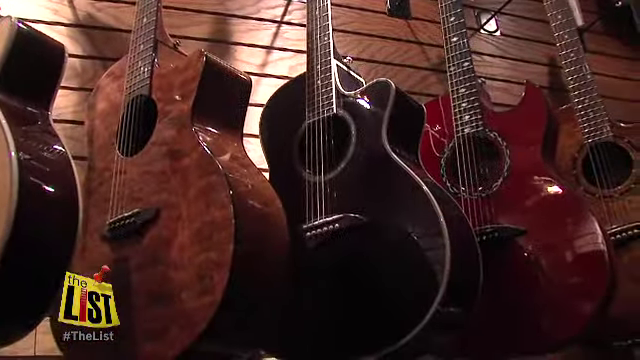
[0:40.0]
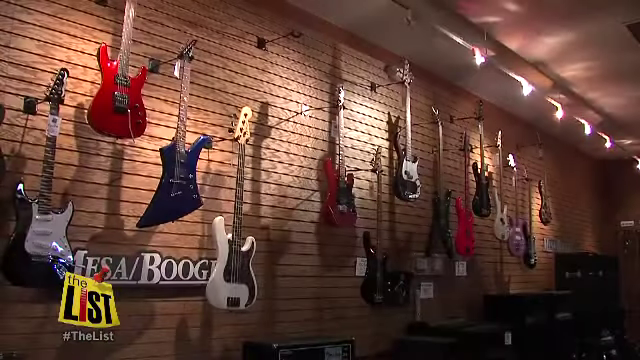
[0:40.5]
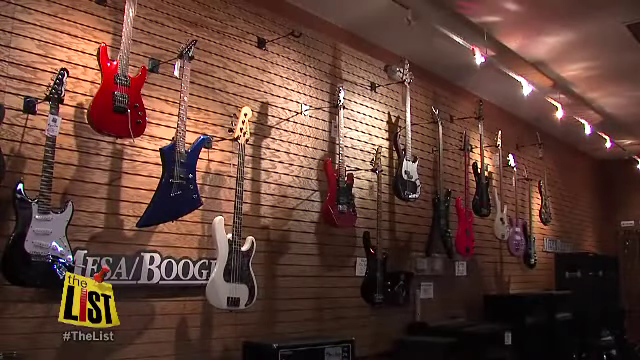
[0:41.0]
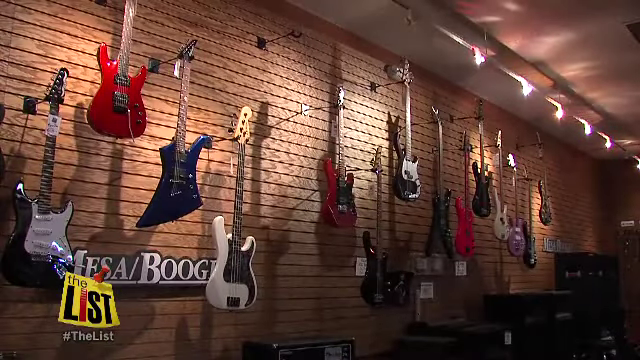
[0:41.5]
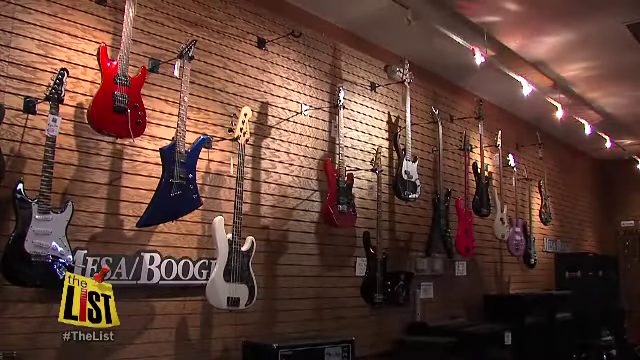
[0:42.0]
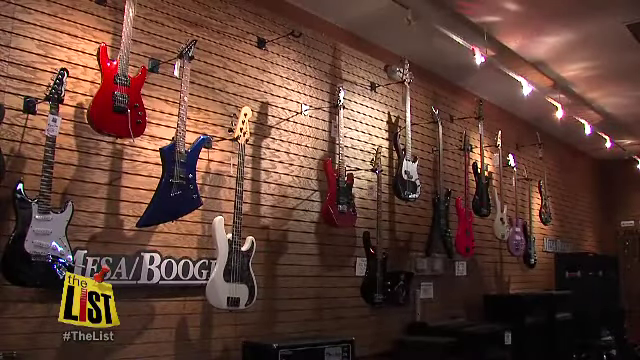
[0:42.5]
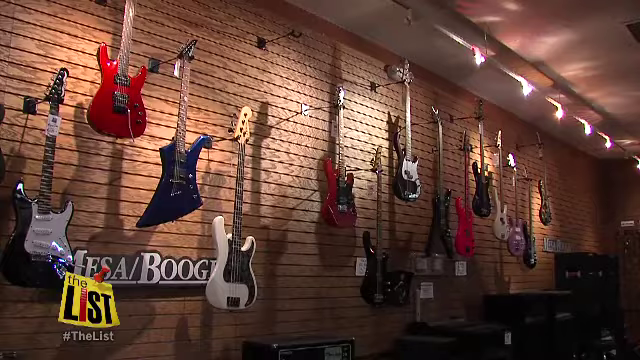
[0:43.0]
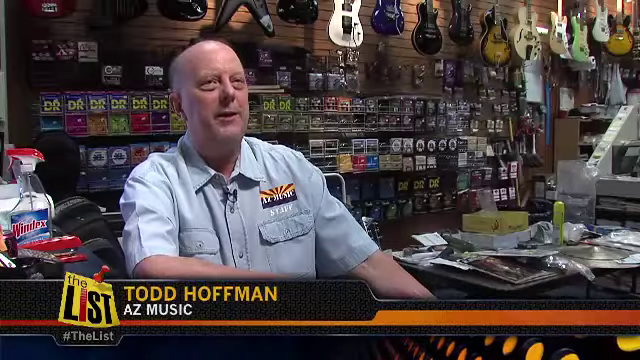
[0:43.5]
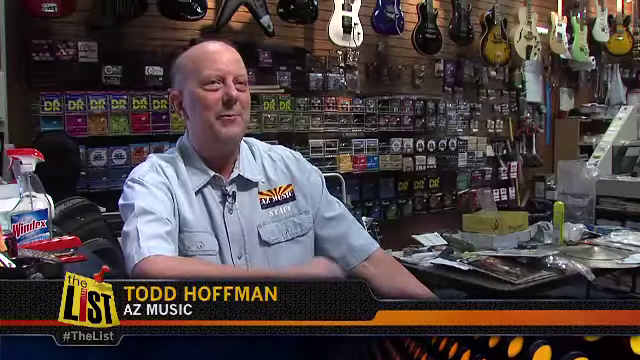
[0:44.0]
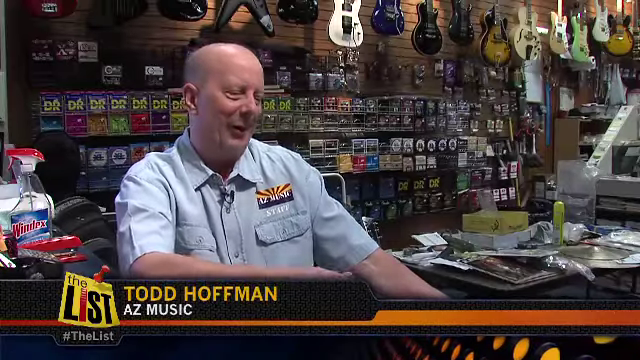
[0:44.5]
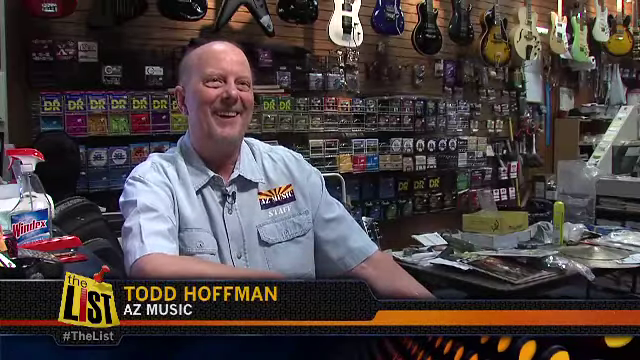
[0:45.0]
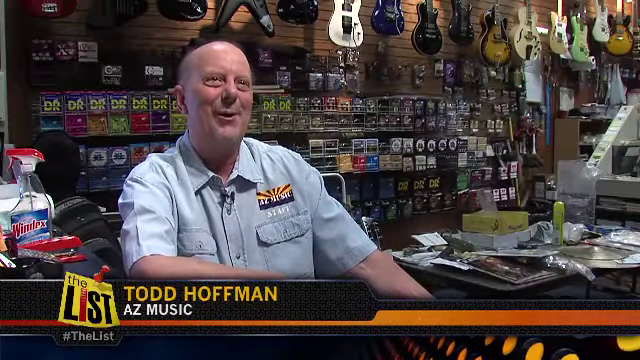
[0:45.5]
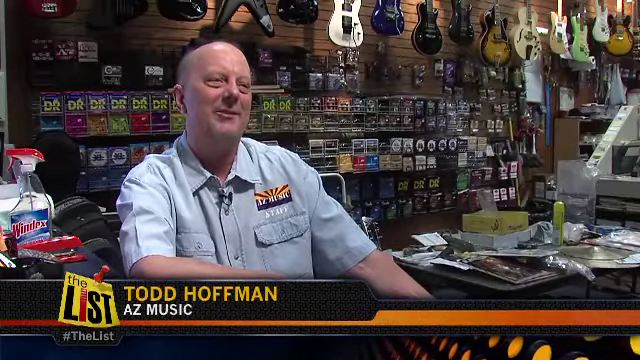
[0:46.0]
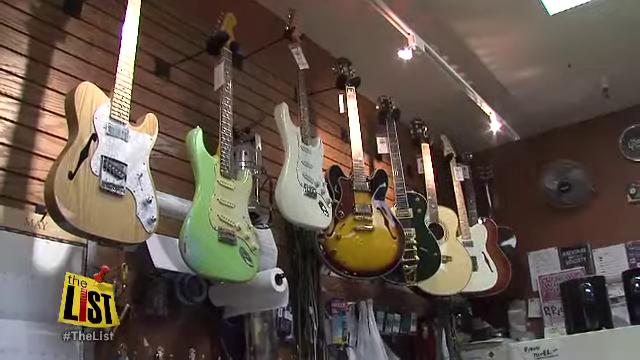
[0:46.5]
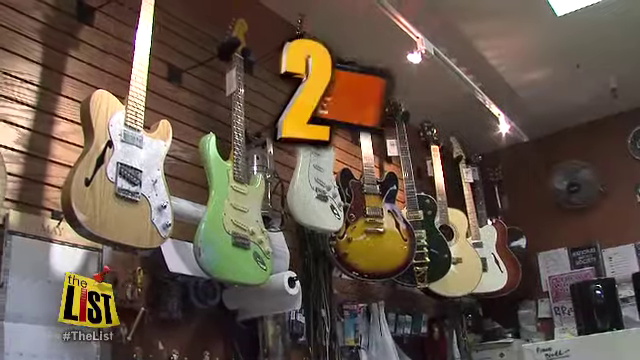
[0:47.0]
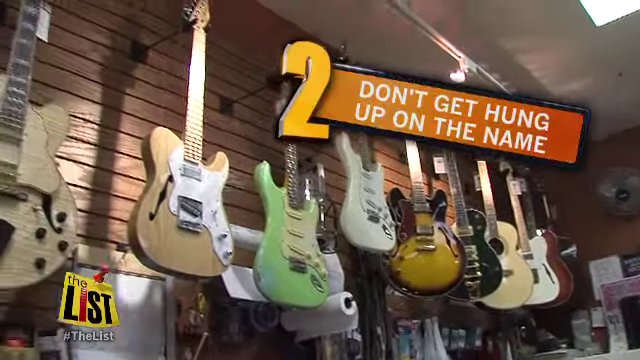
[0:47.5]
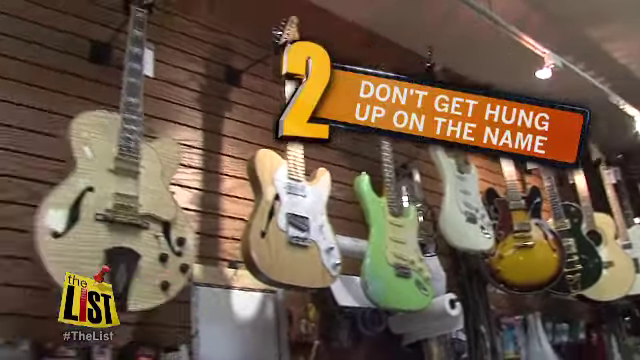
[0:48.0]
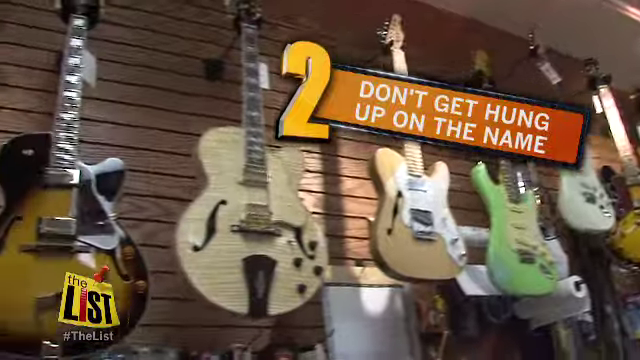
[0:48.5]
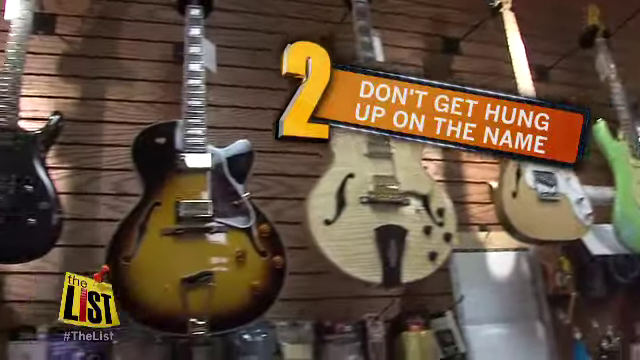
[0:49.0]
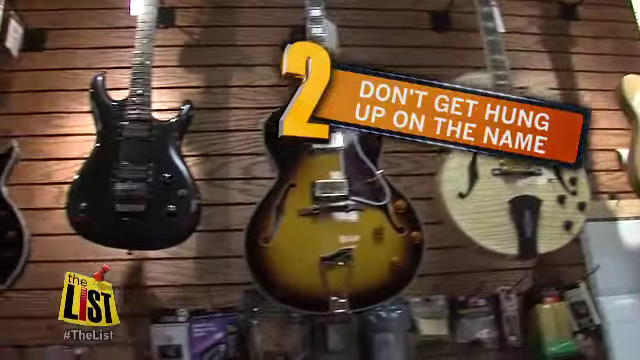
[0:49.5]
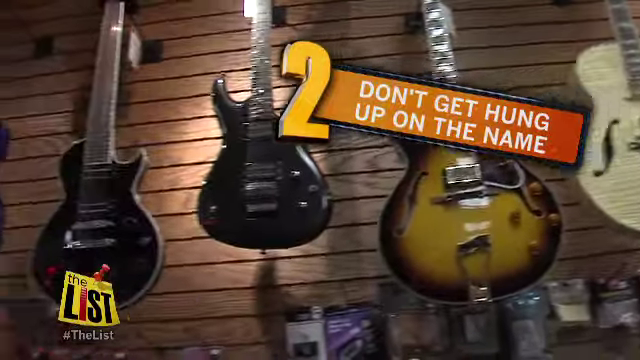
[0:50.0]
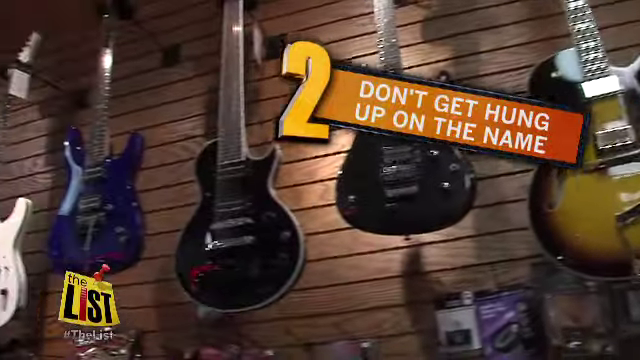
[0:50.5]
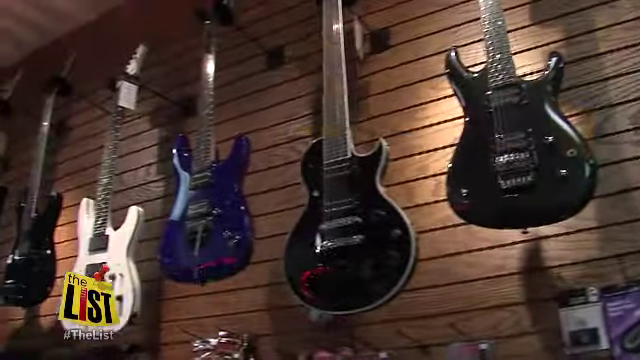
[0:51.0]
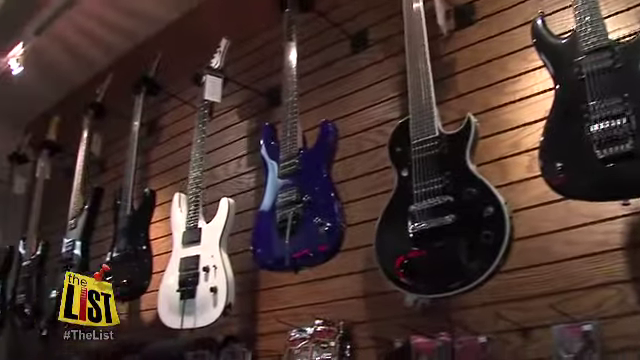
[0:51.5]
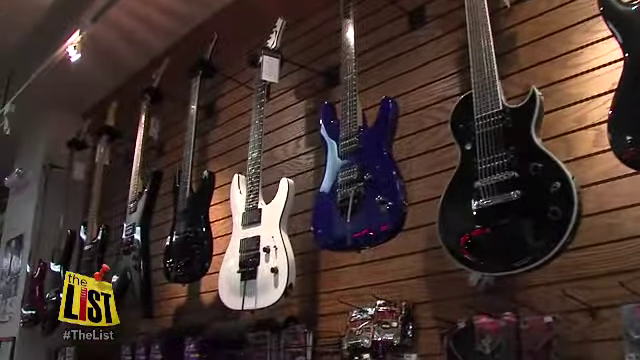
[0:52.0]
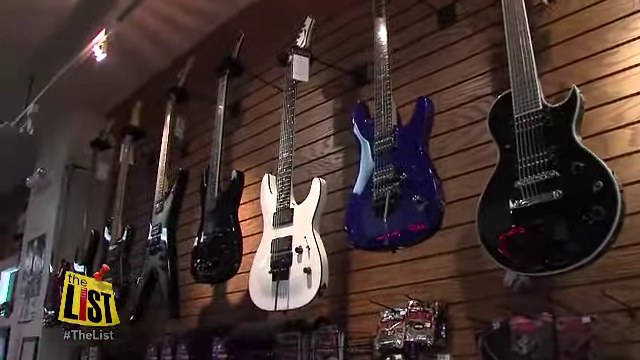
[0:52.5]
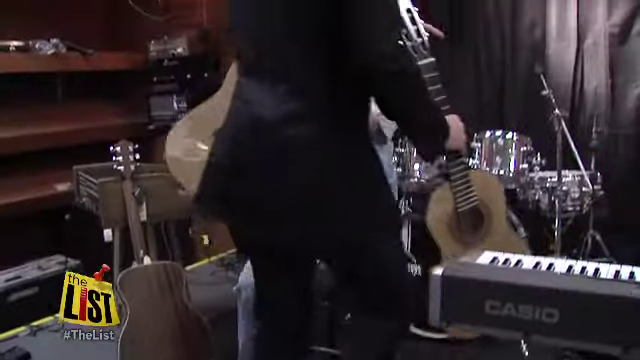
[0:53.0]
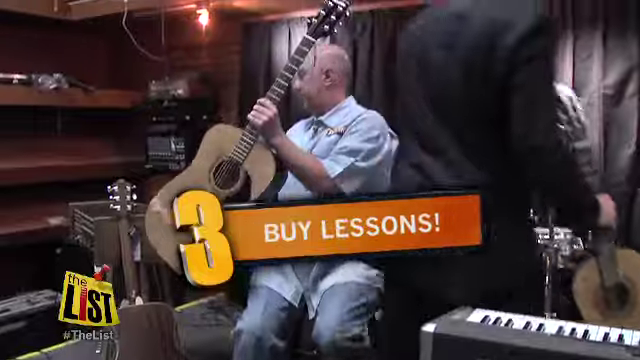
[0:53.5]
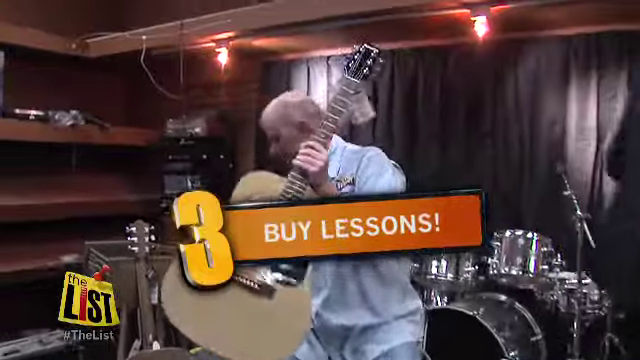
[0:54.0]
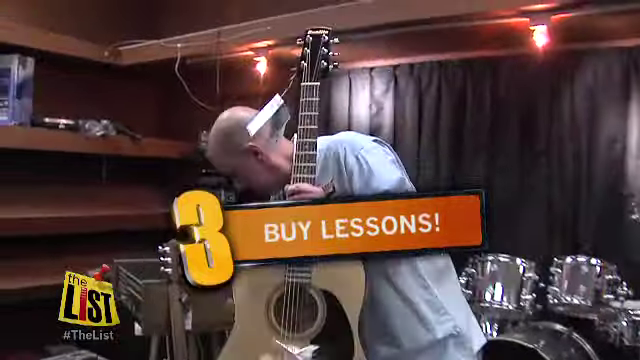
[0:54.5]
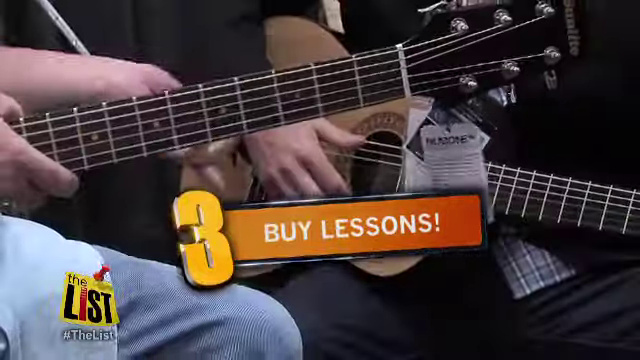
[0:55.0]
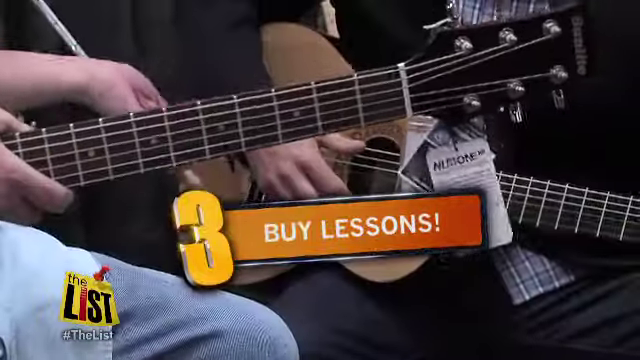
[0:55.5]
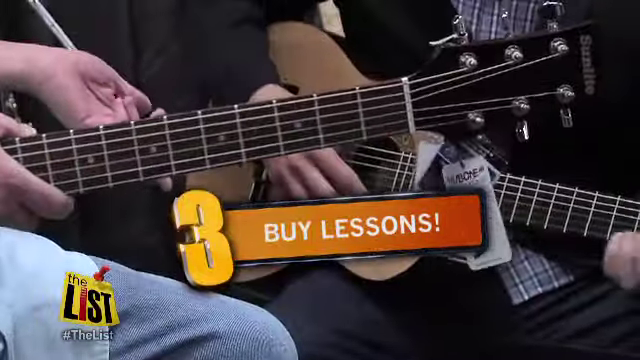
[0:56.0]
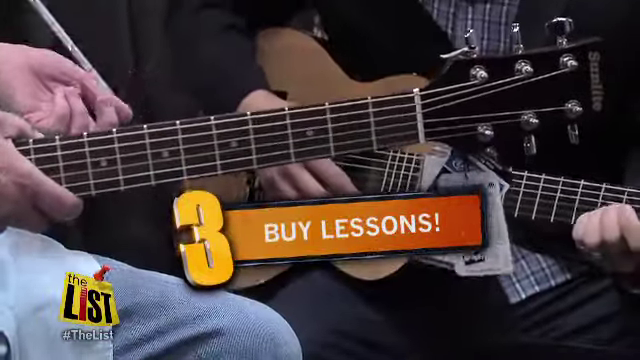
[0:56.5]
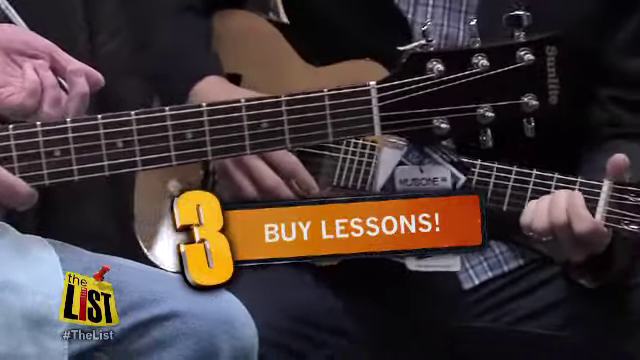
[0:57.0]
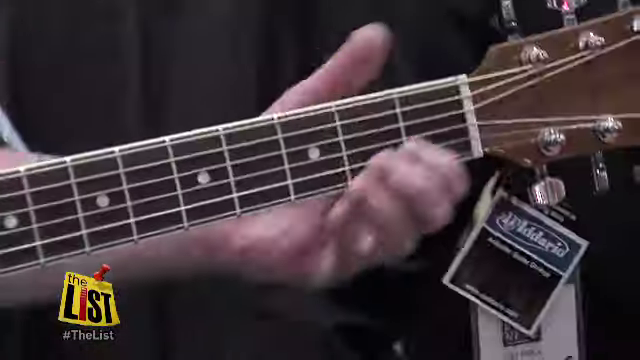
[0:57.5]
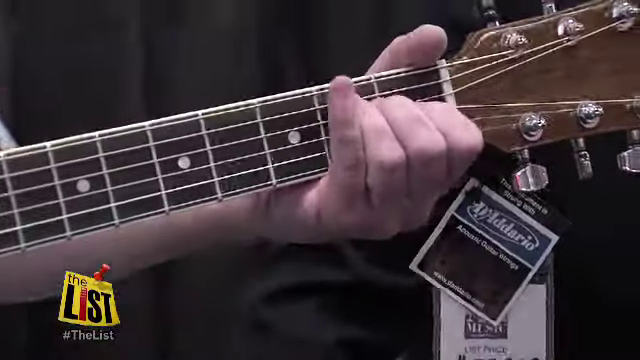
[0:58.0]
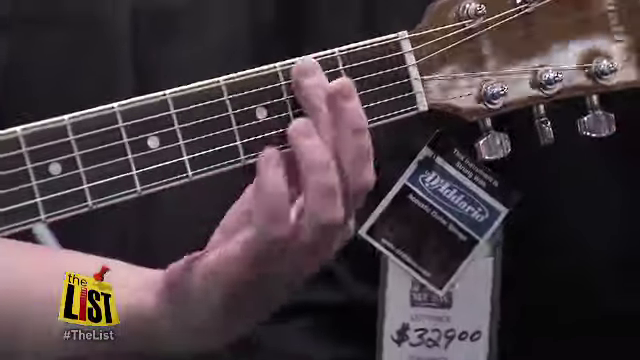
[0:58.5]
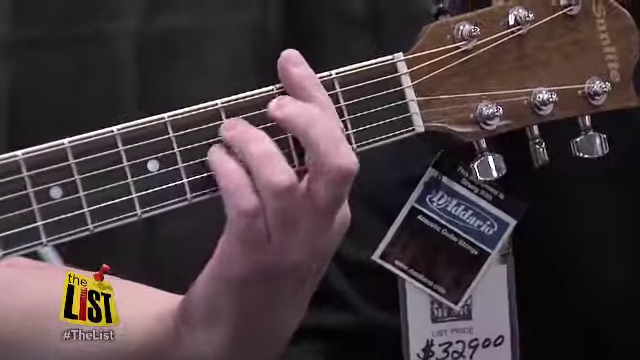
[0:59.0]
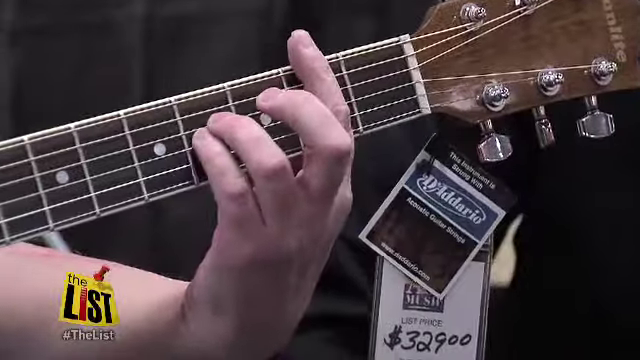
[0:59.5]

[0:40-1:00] A close-up in a music store shows lines of guitars hung from a wall whose wood slats run horizontally. In the lower left corner is the program's logo, a yellow rectangle that reads "The List" with a red push pin stuck on top. The camera backs up to reveal a larger view of a wall of the music store displaying electric guitars in a variety of colors, all hanging vertically. A string of lights on the ceiling shines light on the guitars. White bold text in the lower left corner says "Mesa," and then a man who might be the owner of the store is interviewed. He is bald, perhaps in his early 60s, and wears a blue collared shirt.